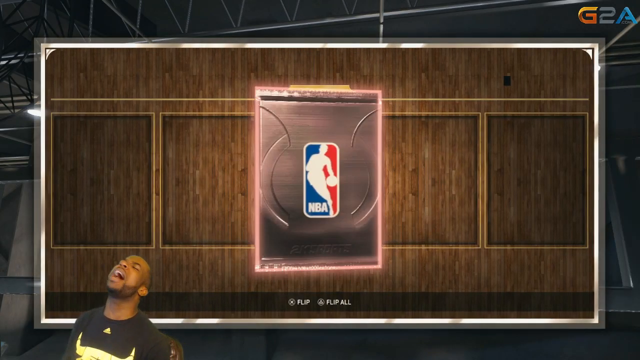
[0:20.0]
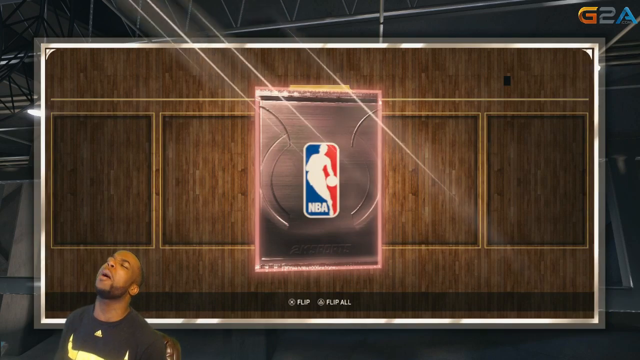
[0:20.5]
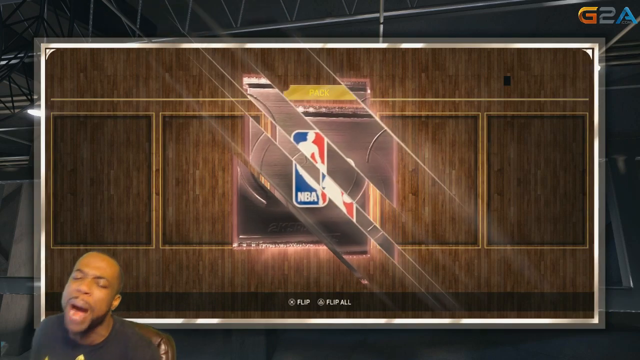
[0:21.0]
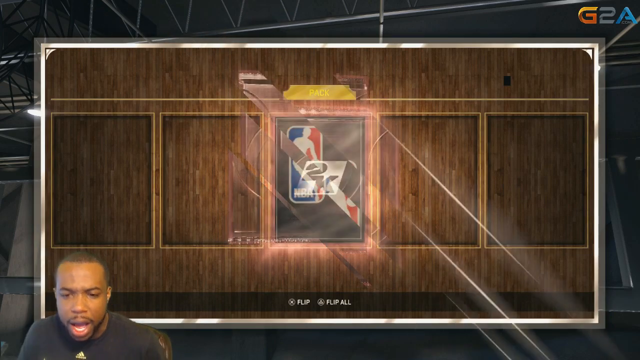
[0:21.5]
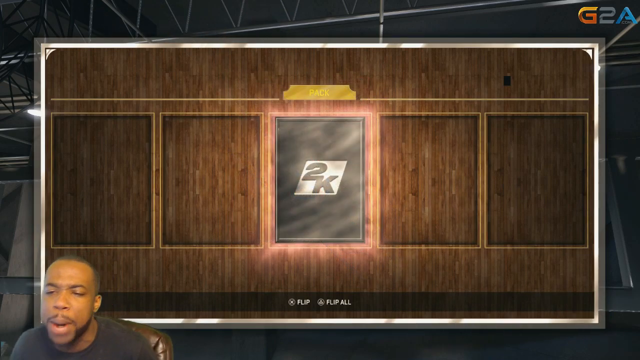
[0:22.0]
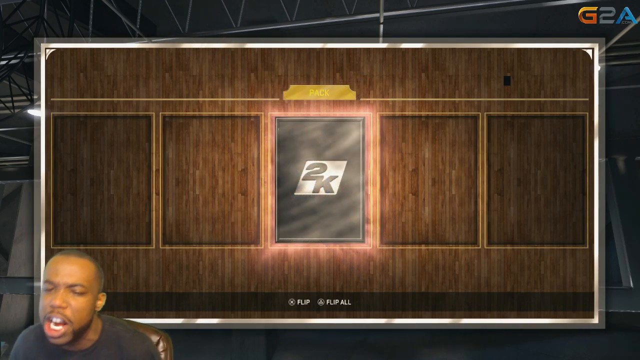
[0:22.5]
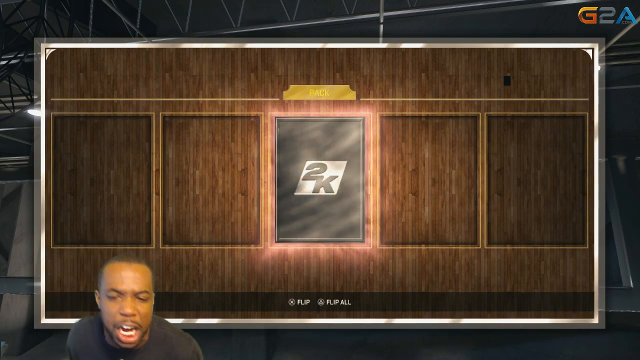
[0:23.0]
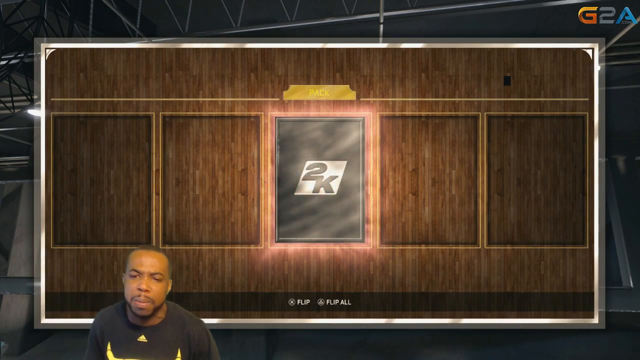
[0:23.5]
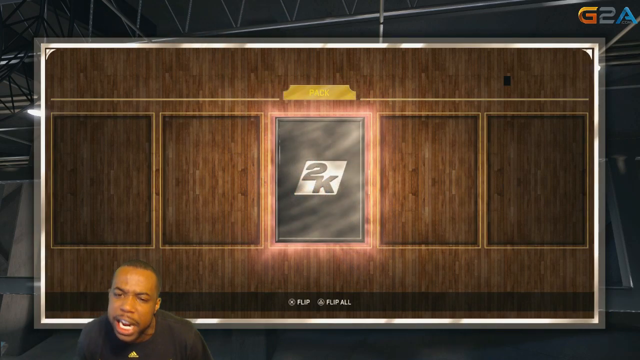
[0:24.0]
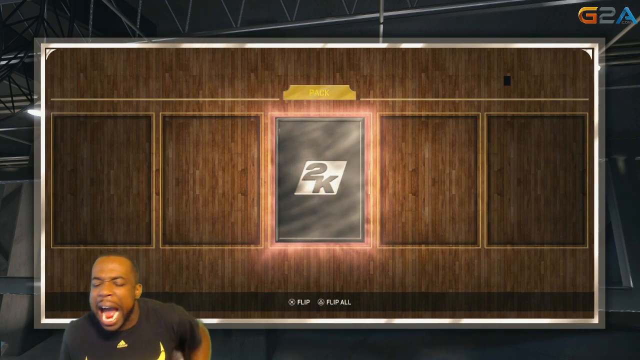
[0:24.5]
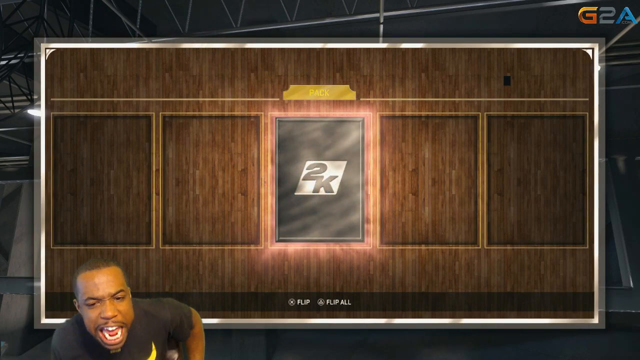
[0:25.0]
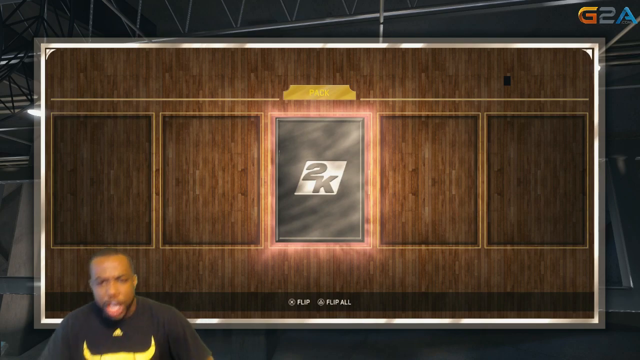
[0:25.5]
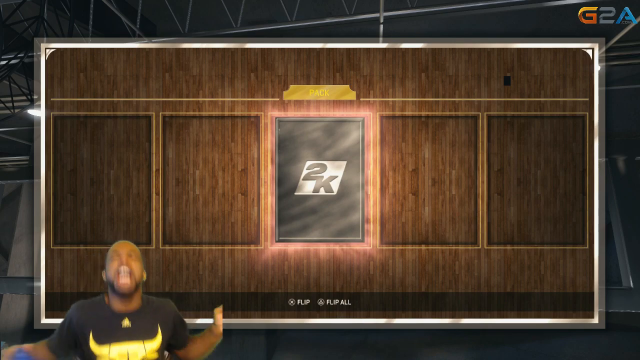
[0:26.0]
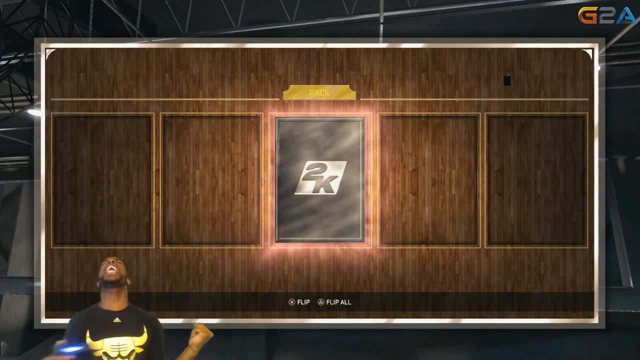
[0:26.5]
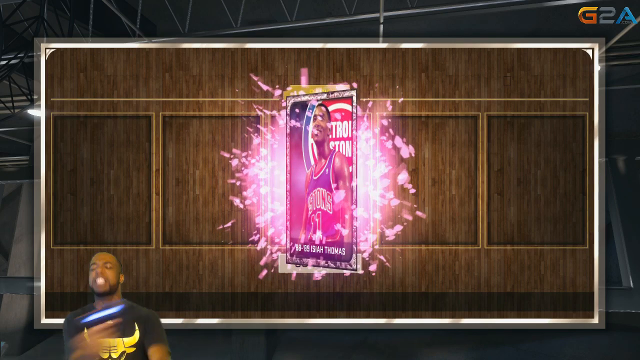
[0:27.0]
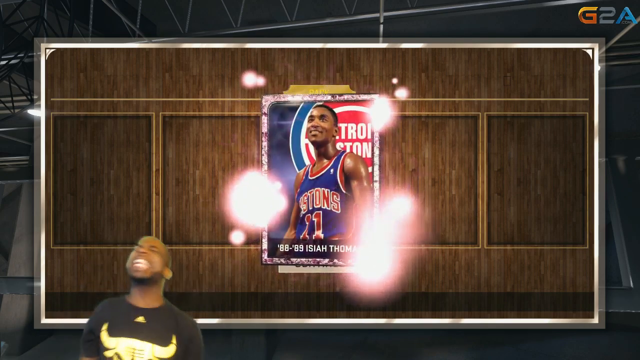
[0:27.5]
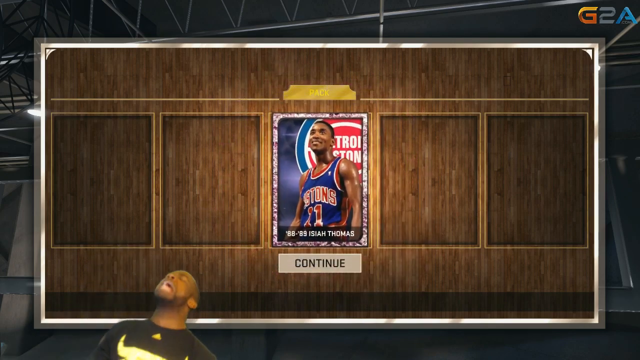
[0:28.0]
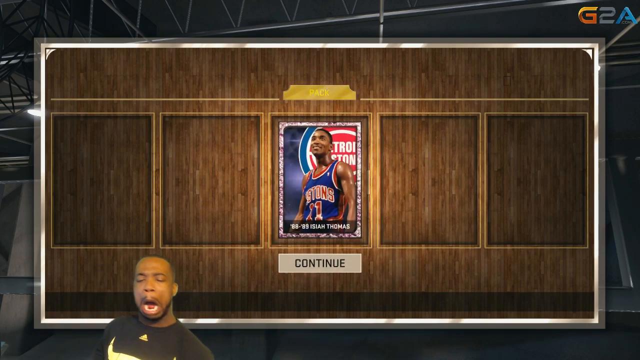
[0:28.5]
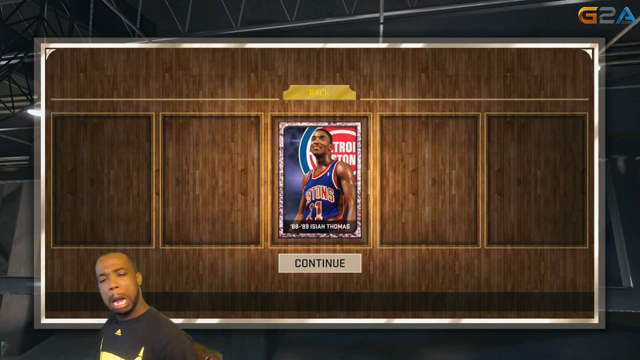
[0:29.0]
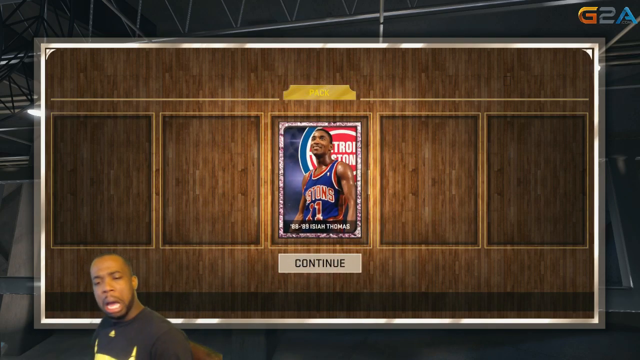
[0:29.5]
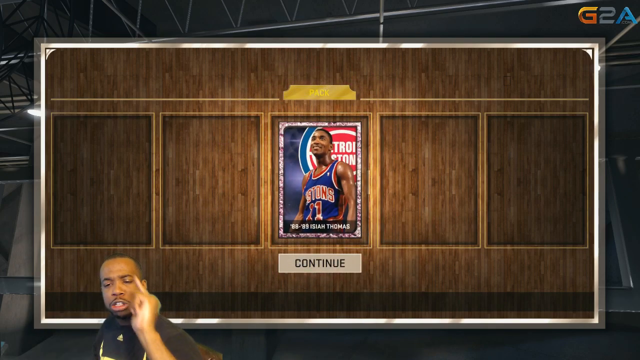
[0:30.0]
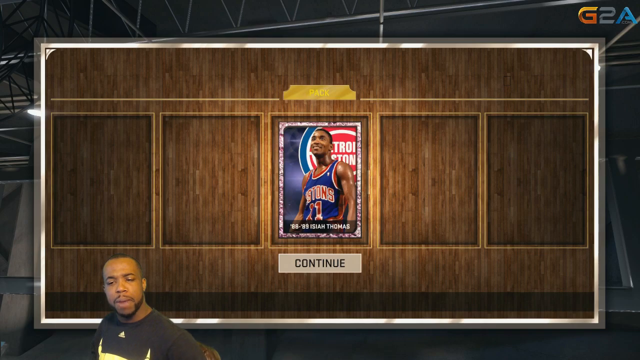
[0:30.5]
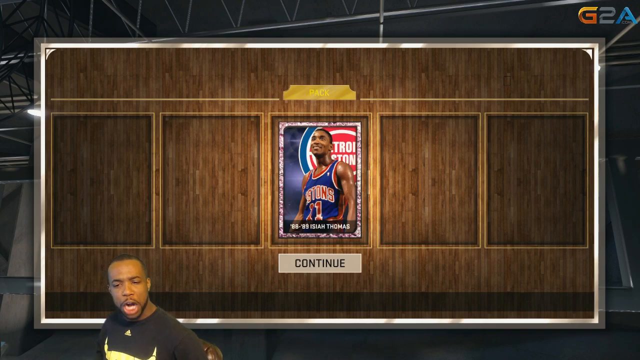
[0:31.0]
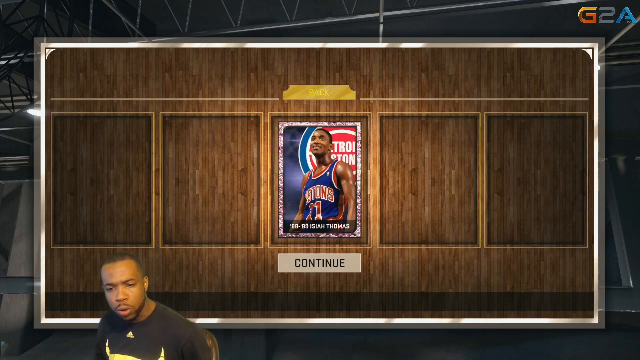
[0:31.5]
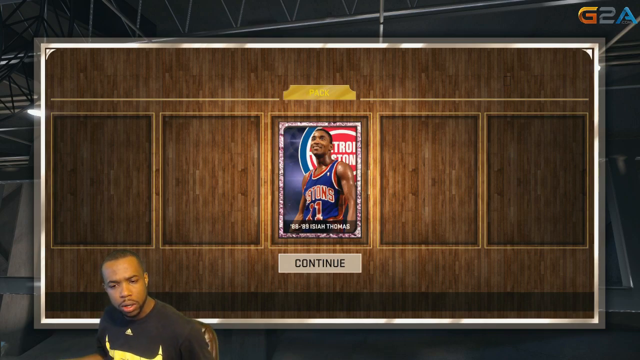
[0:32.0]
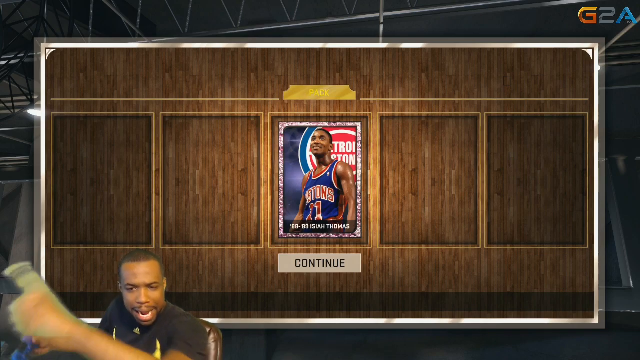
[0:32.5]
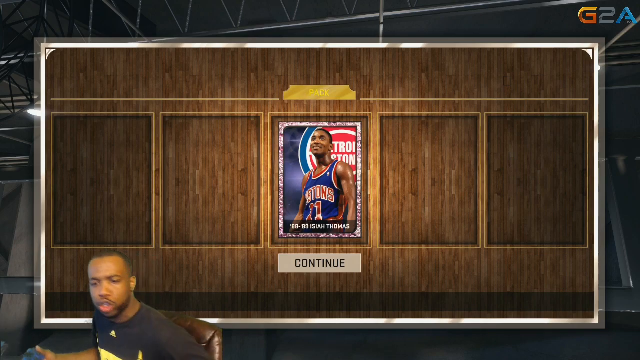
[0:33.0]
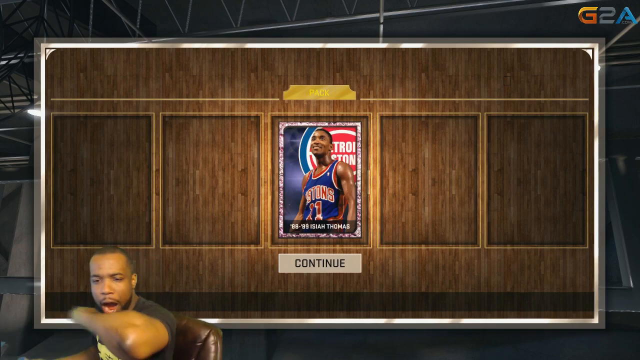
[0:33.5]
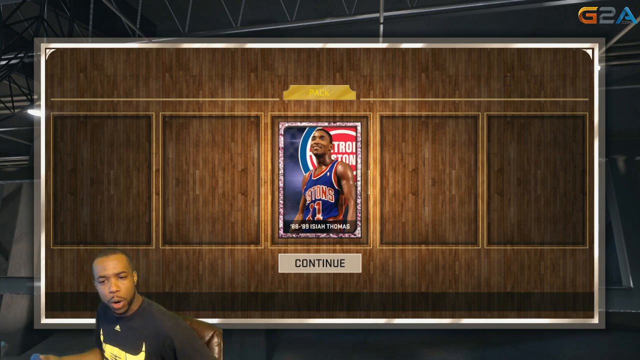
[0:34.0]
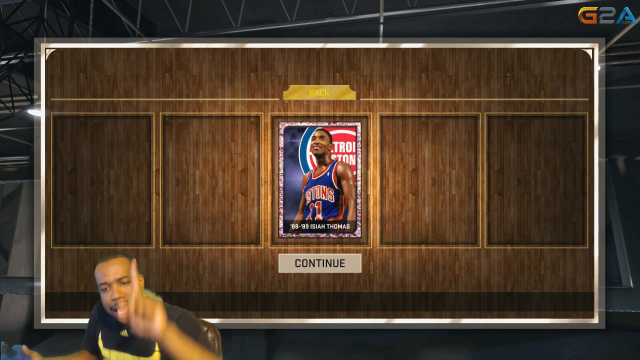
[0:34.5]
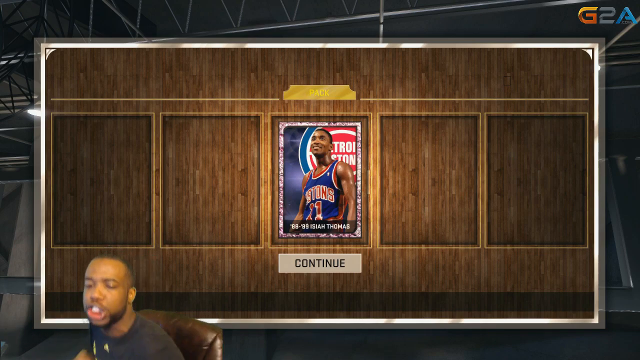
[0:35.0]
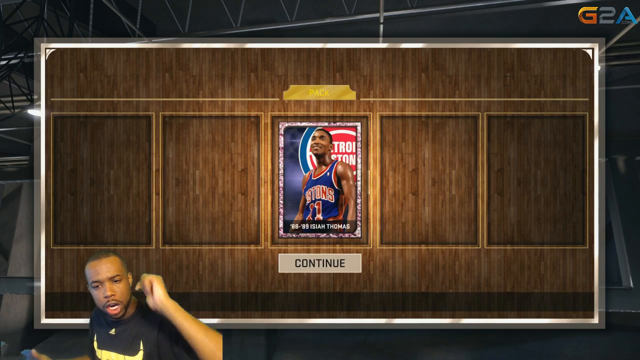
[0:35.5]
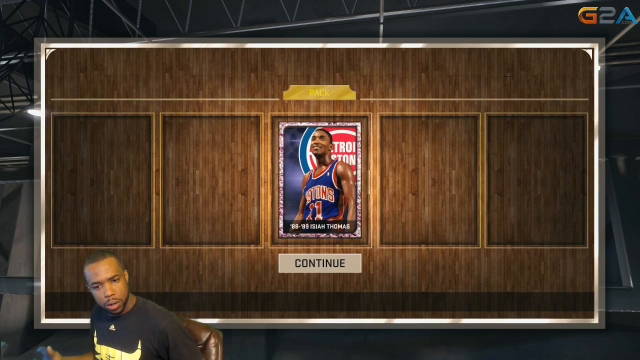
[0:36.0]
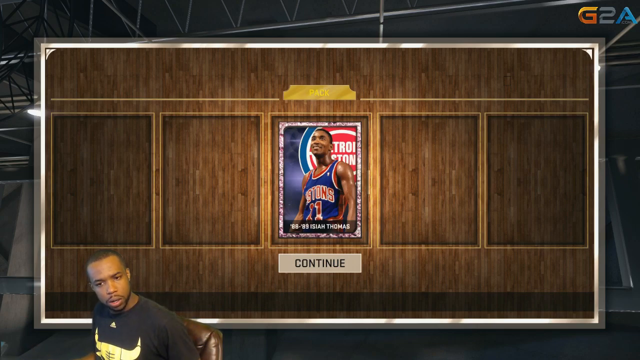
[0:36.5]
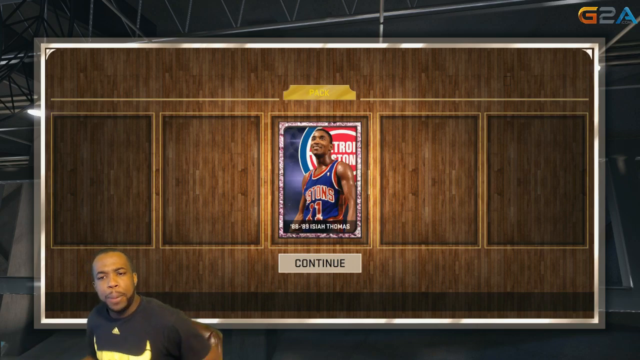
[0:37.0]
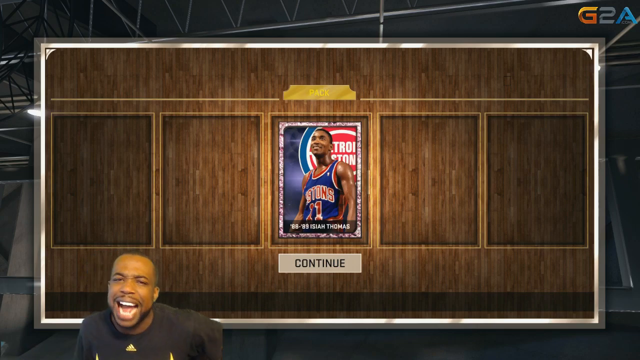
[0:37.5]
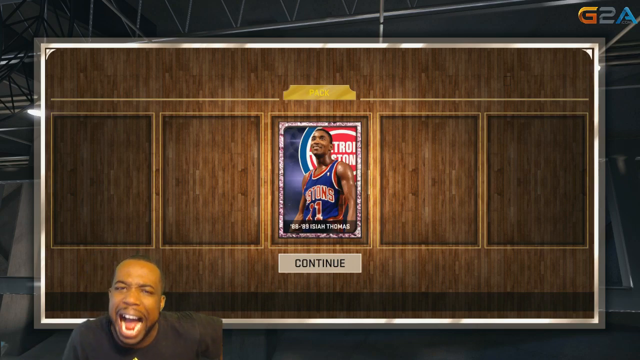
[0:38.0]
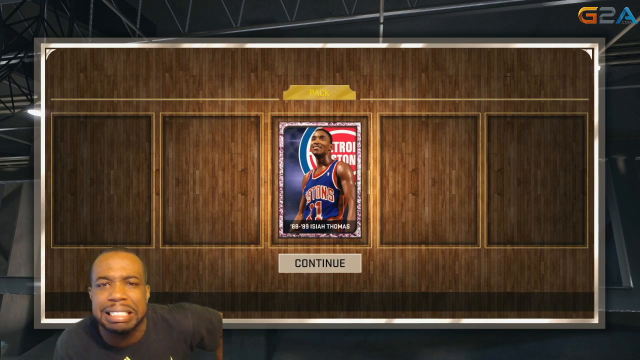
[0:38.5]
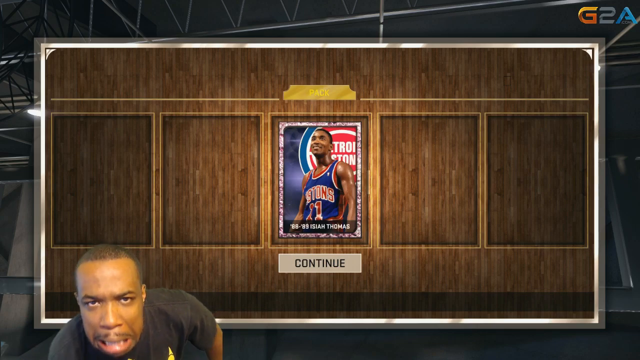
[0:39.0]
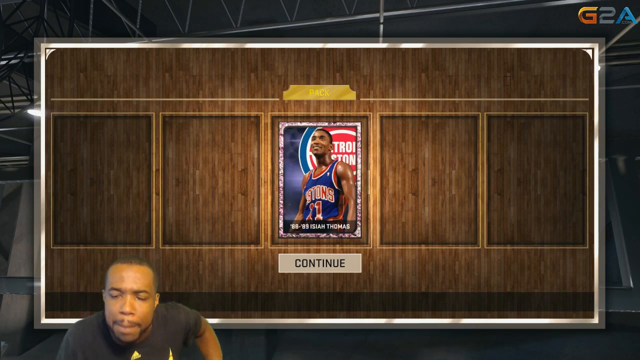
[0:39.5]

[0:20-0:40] The NBA logo and the 2K logo appear in the center band of the screen while the man in the lower left, wearing a black t-shirt, continues to speak animatedly into the camera. A basketball trading card motif of Detroit Pistons star Isaiah Thomas appears in the center of the screen. A caption notes the 88-89 NBA season, and a button below the trading card image says "continue". The man gesticulates, waving his left arm and shouting into the camera, clearly excited. The logo in the center of the screen then changes from Isaiah Thomas to the NBA logo.